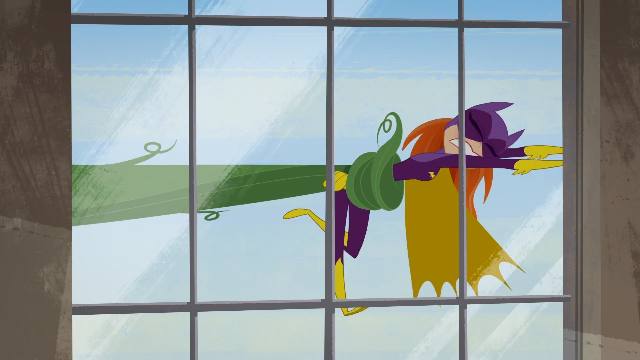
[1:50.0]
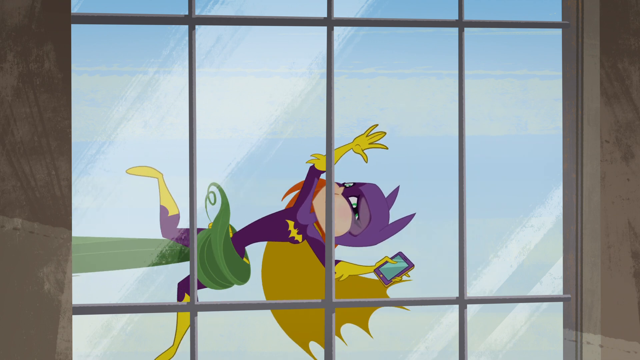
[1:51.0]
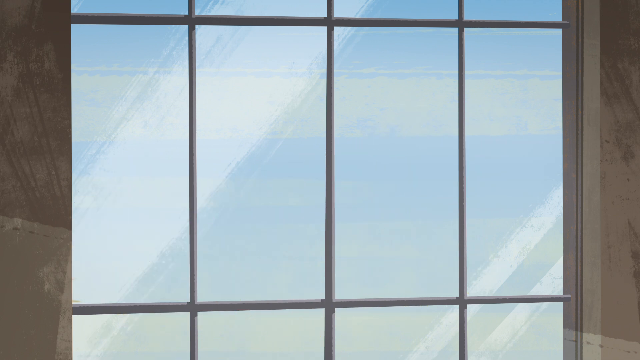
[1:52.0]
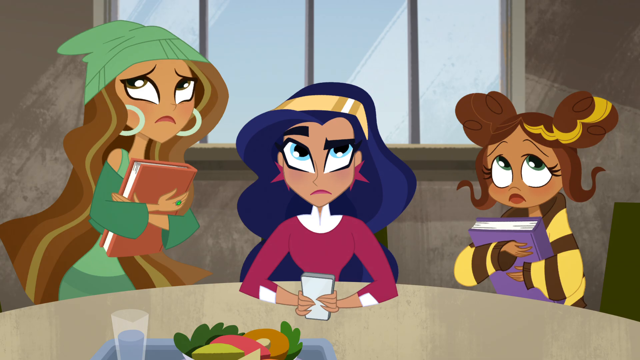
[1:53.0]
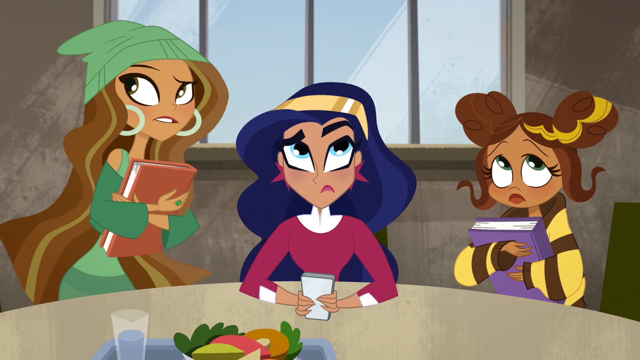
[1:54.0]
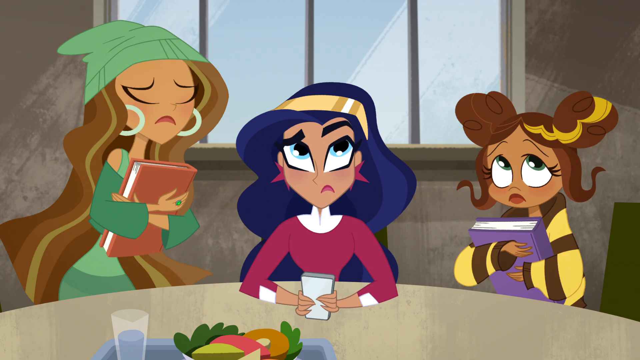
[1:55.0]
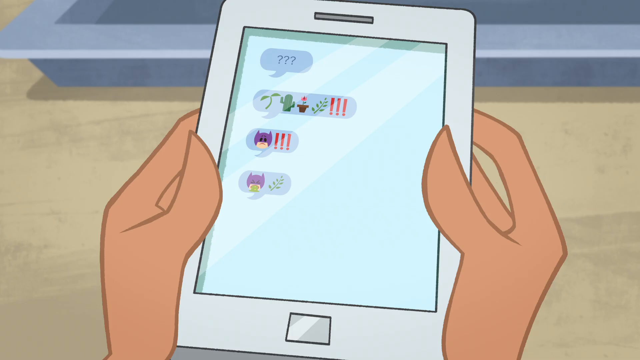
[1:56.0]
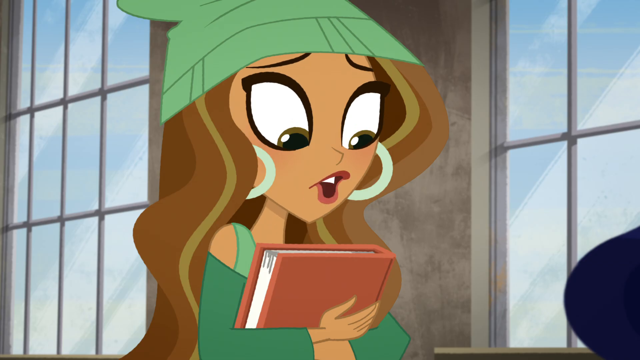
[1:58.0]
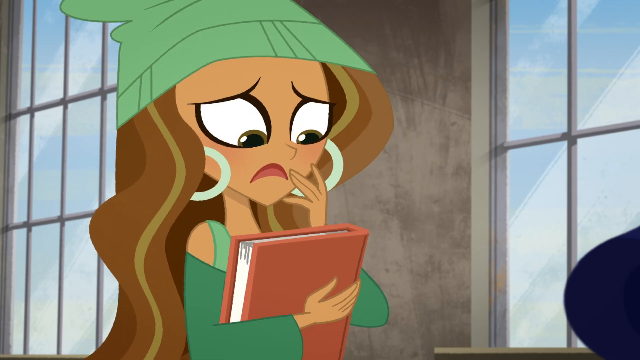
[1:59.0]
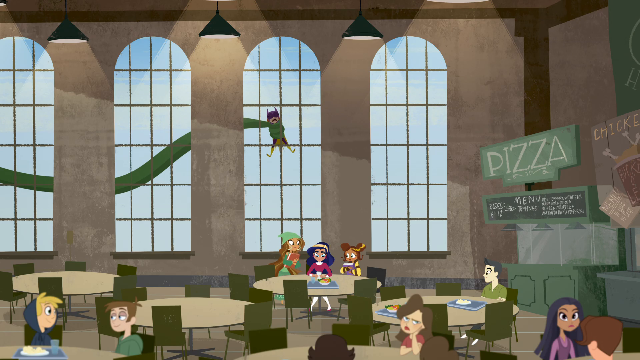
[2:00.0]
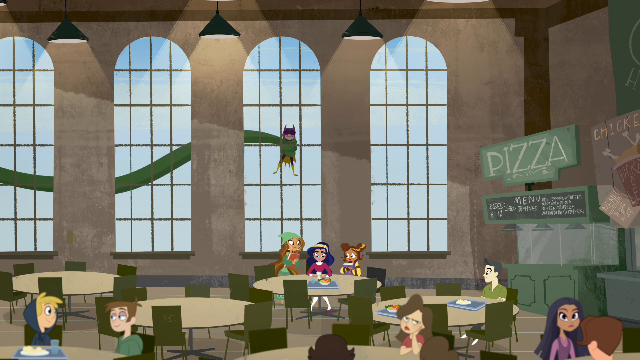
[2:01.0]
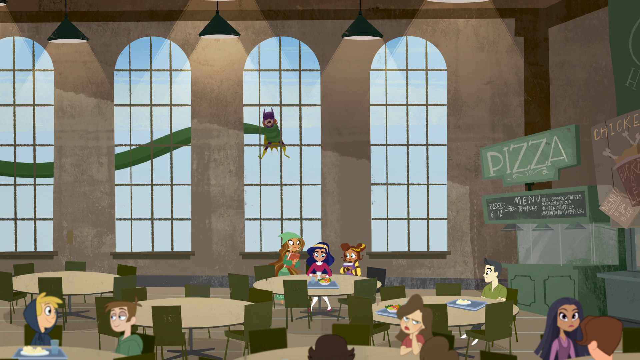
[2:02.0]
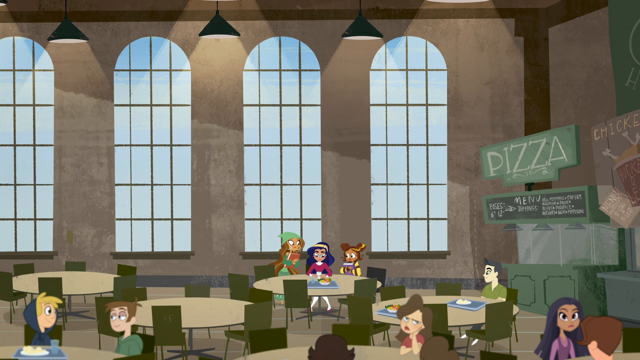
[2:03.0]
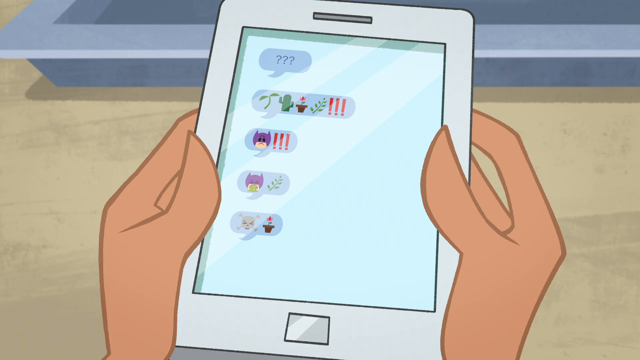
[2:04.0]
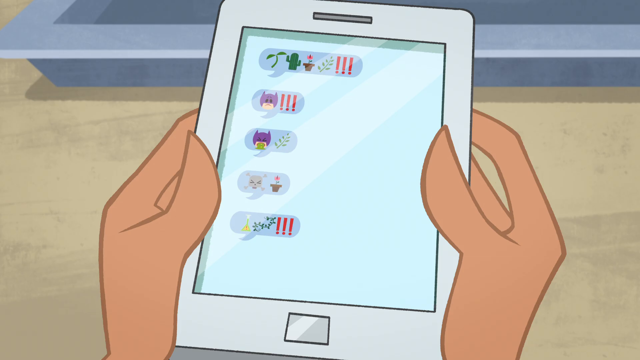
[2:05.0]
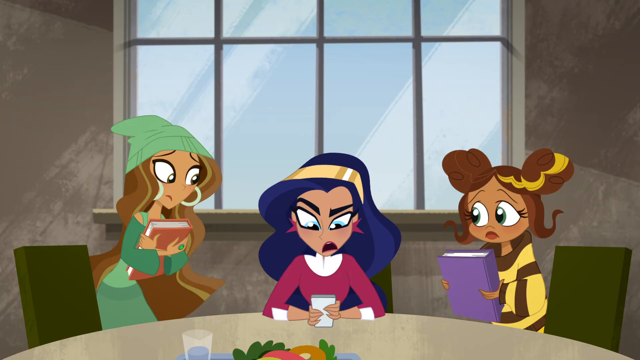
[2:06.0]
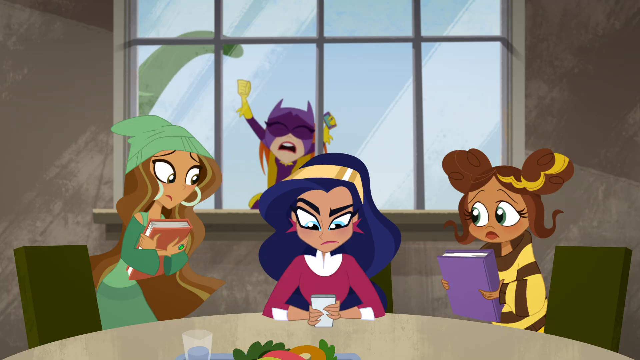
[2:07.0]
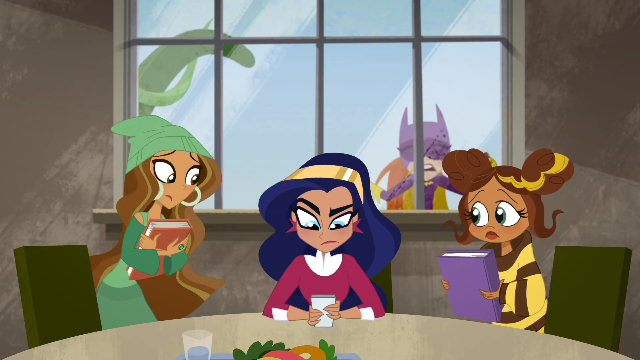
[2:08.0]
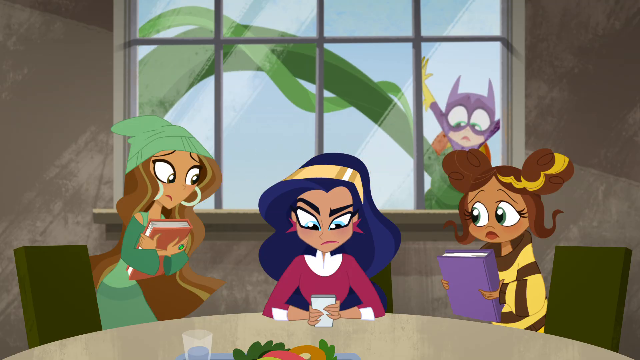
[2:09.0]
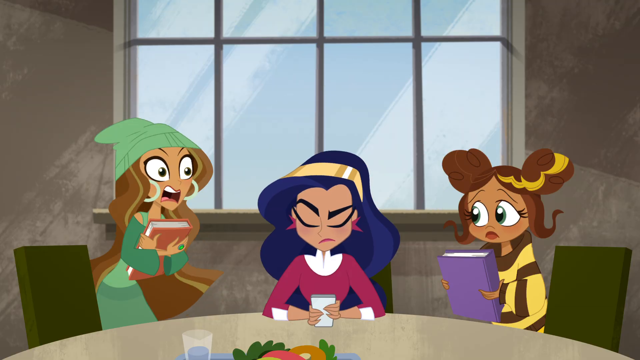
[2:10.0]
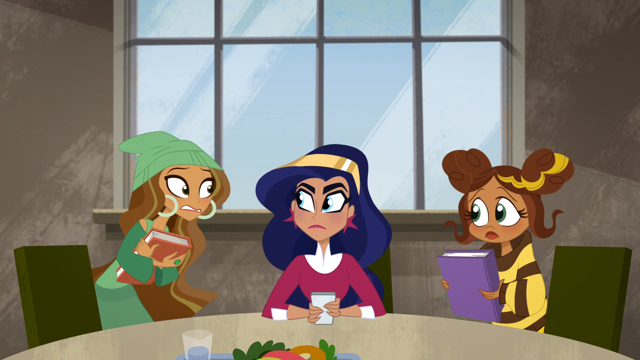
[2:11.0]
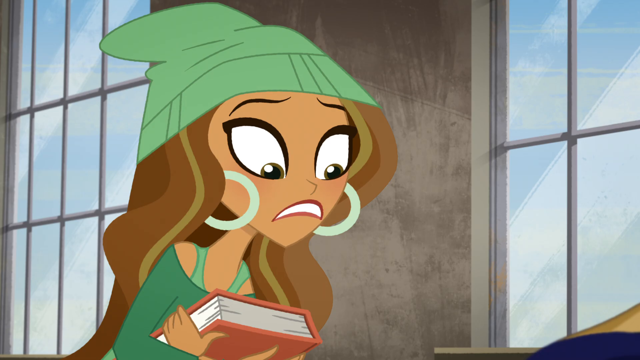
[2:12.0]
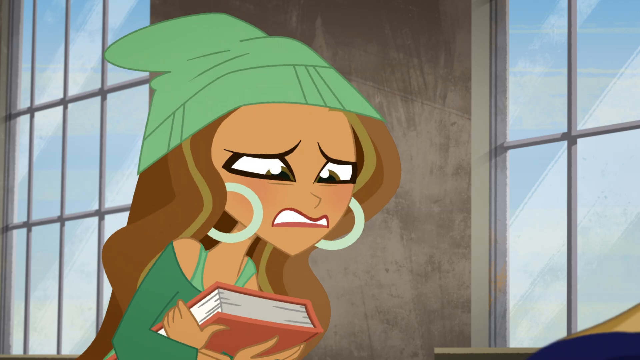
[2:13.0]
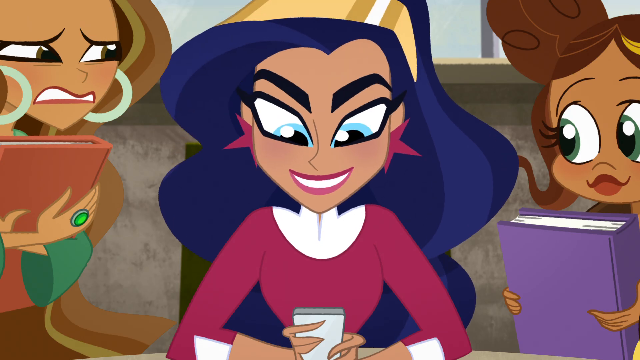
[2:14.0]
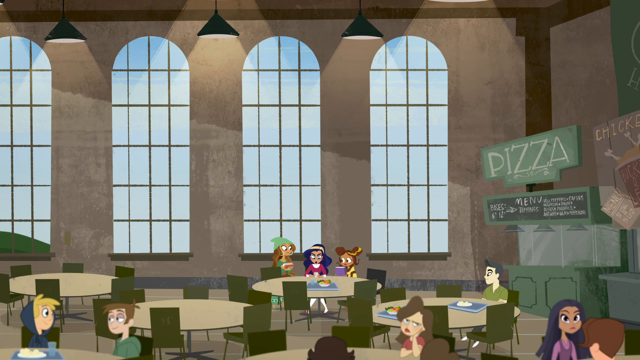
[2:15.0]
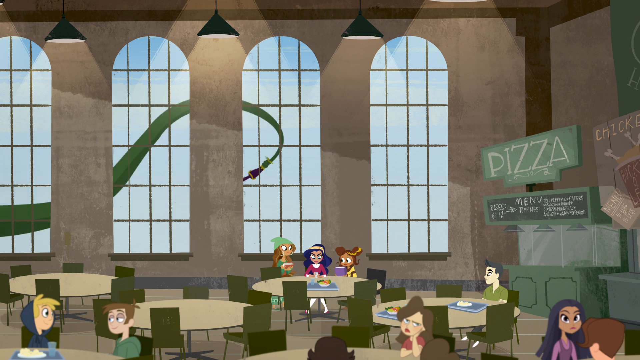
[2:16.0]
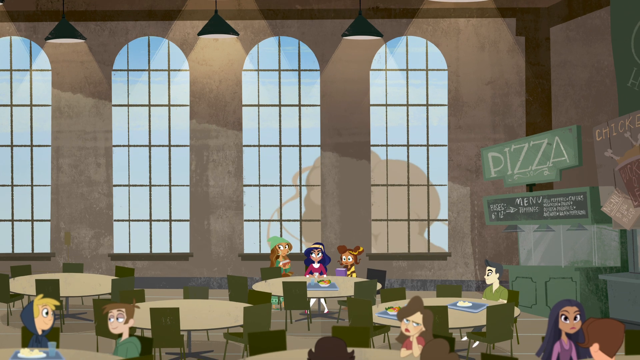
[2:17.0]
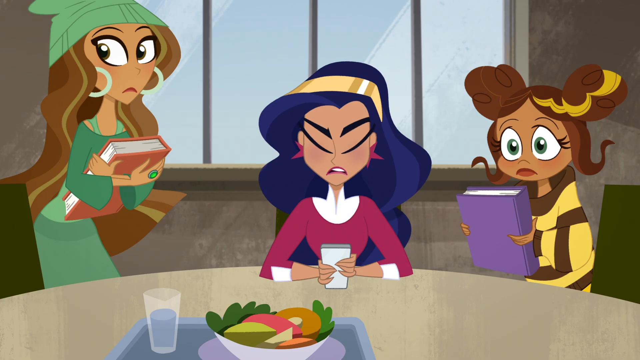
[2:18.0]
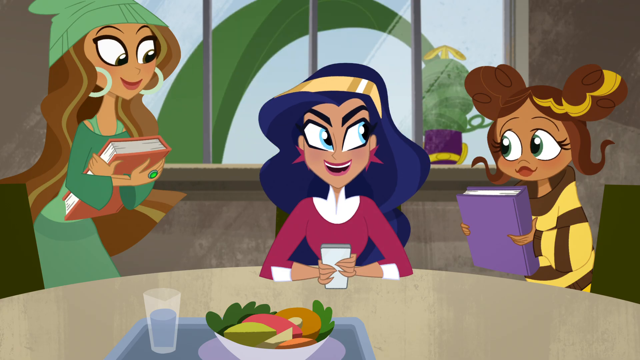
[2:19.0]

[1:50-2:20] The green tentacle monster has hold of the superhero, who is dressed in a purple outfit and a yellow cape. She holds onto something to the right while the monster pulls her to the left, until she loses her grip and slides across the window. Back in the pizza parlor, the girl with blue hair looks very concerned at her cell phone screen as more messages appear that she cannot understand. In the window behind her, the green tentacle holds the superhero and shakes her around outside. More messages arrive, and the superhero appears to have a cell phone in her hand and to be the one sending the messages to the girl. The girl cannot figure out what they mean. The superhero appears to be asking for help as she is attacked and apparently defeated by the green tentacle monster outside the pizza parlor.